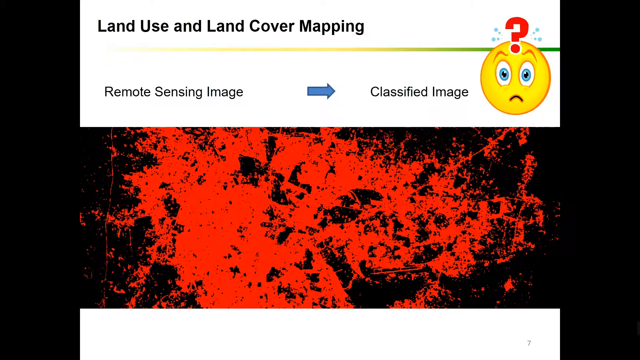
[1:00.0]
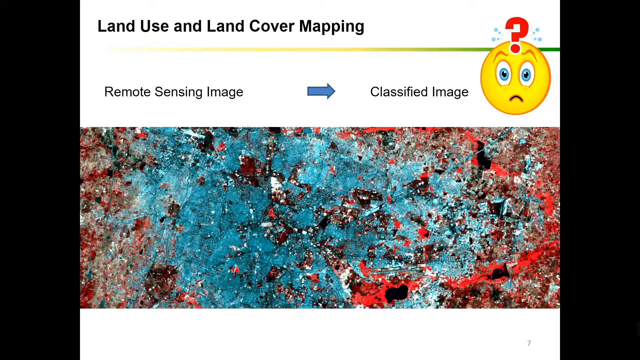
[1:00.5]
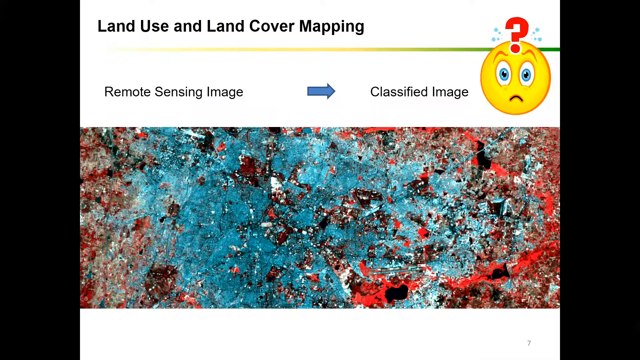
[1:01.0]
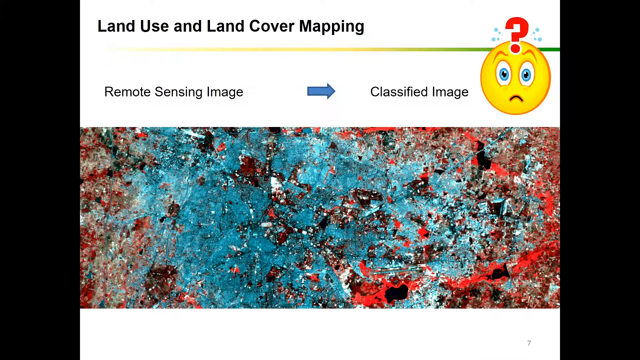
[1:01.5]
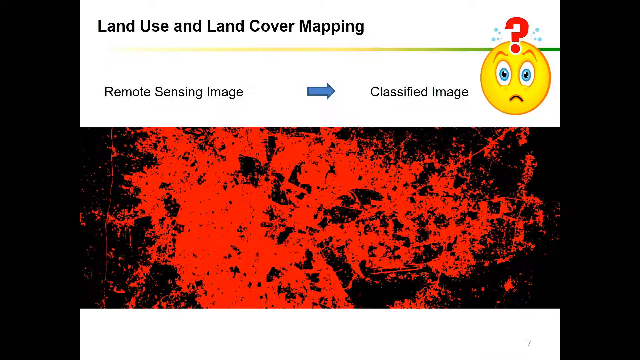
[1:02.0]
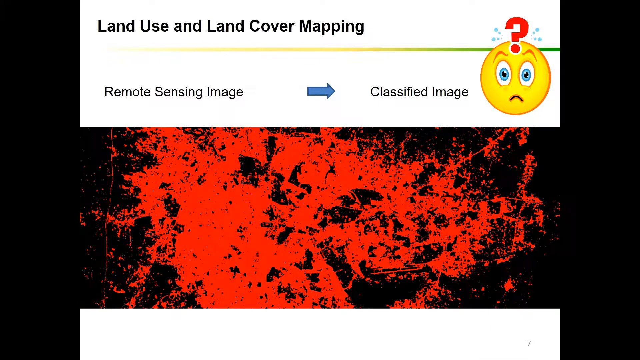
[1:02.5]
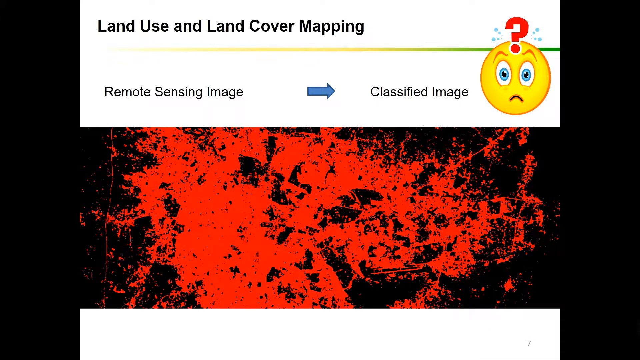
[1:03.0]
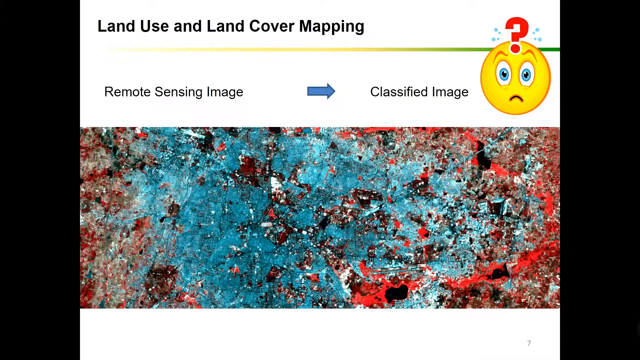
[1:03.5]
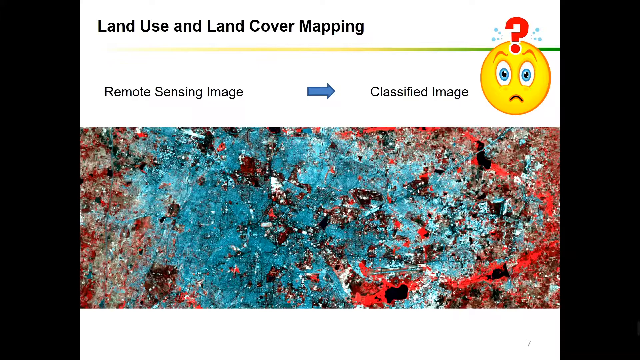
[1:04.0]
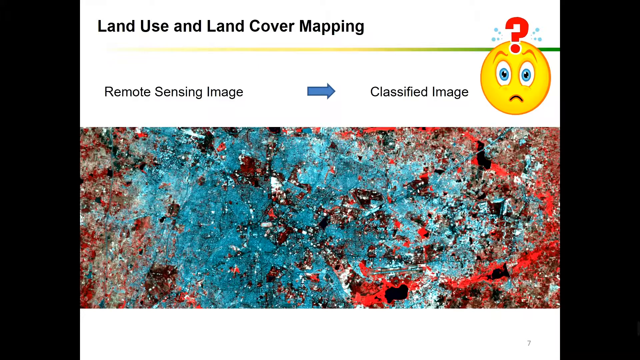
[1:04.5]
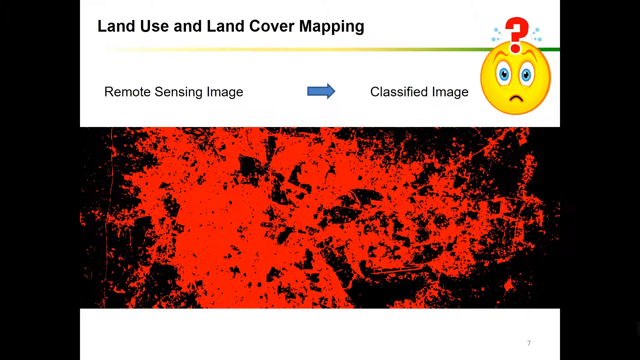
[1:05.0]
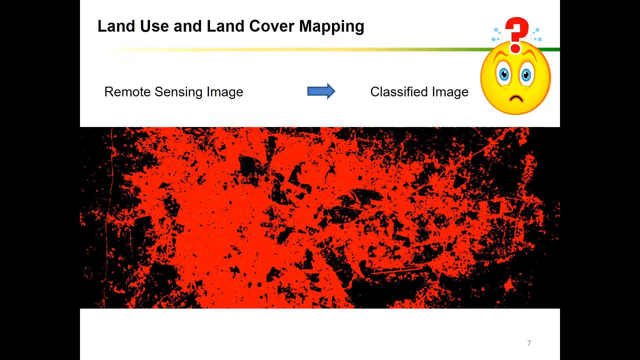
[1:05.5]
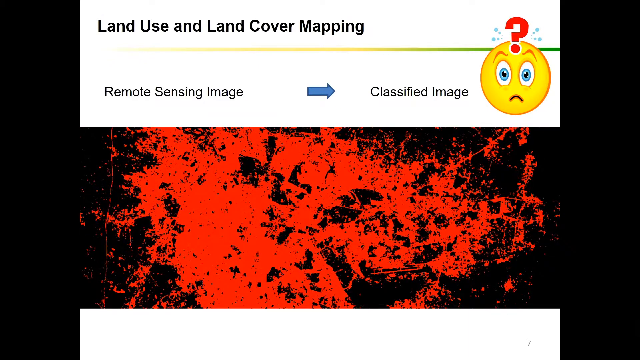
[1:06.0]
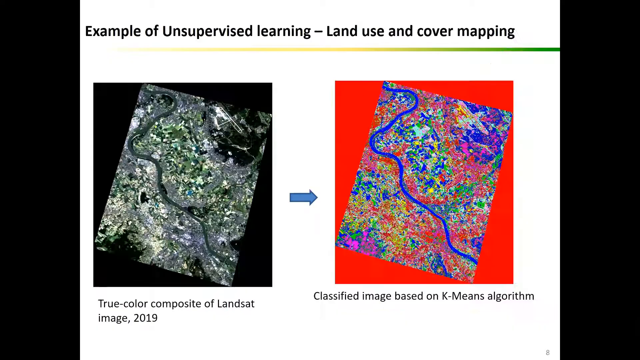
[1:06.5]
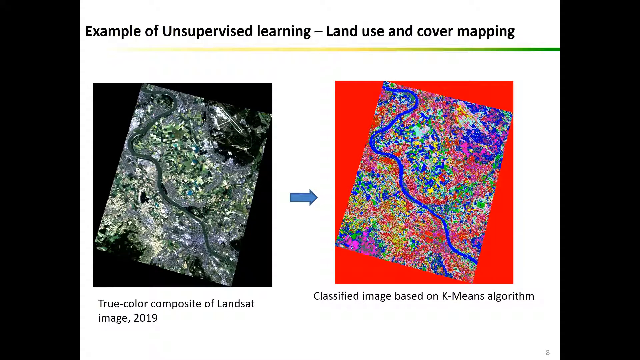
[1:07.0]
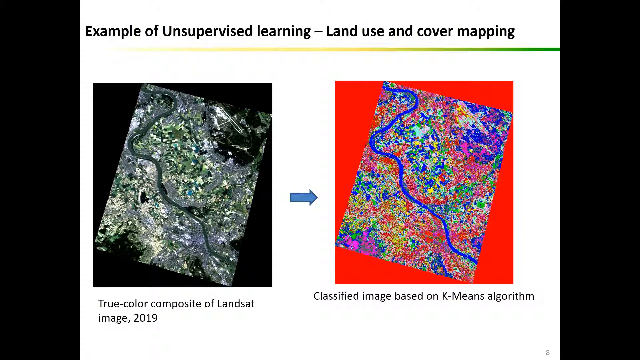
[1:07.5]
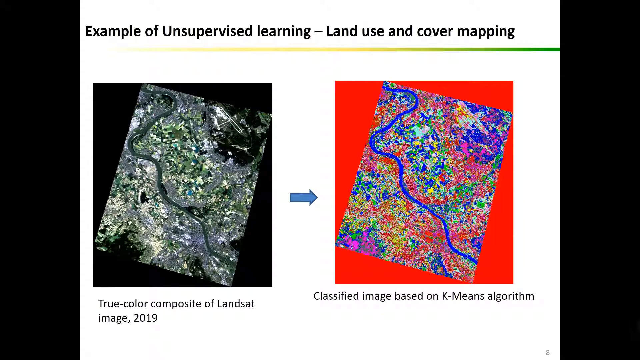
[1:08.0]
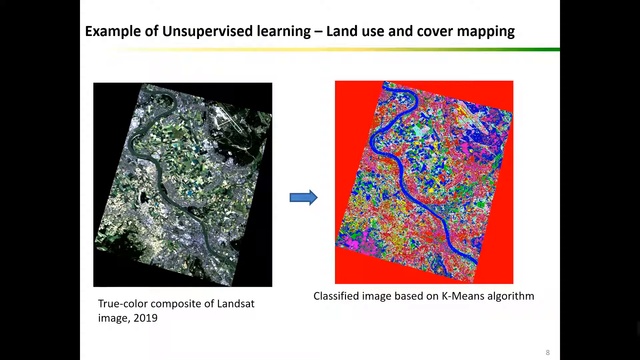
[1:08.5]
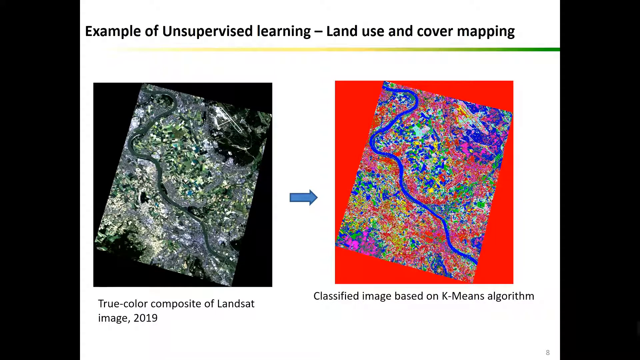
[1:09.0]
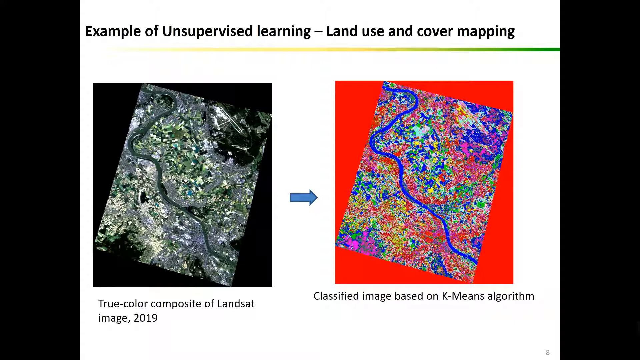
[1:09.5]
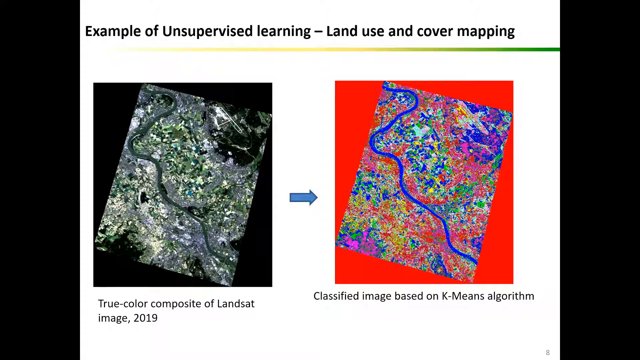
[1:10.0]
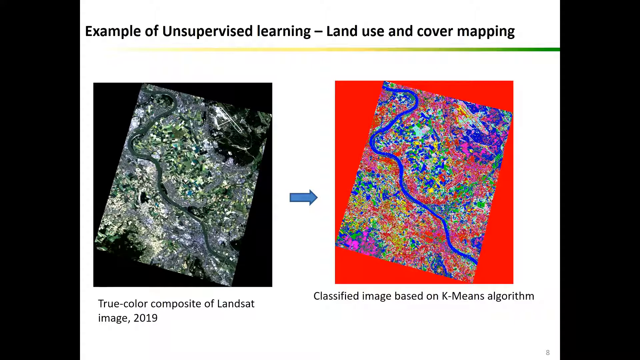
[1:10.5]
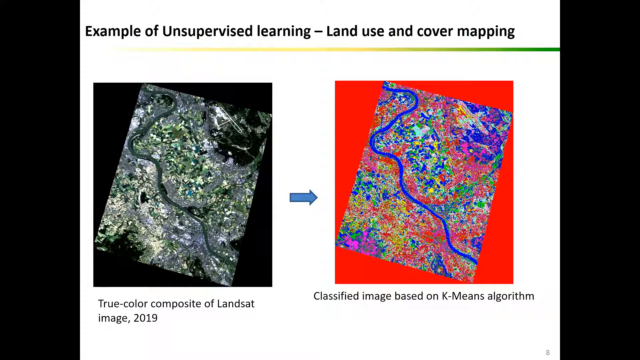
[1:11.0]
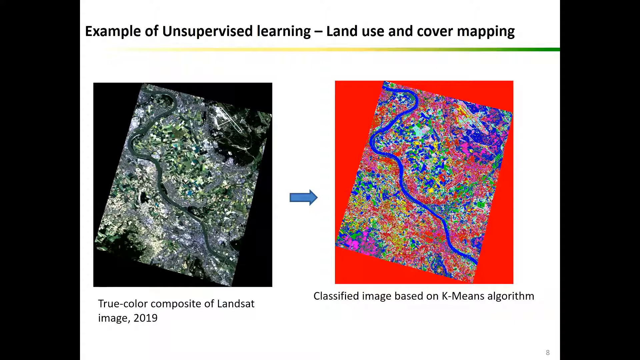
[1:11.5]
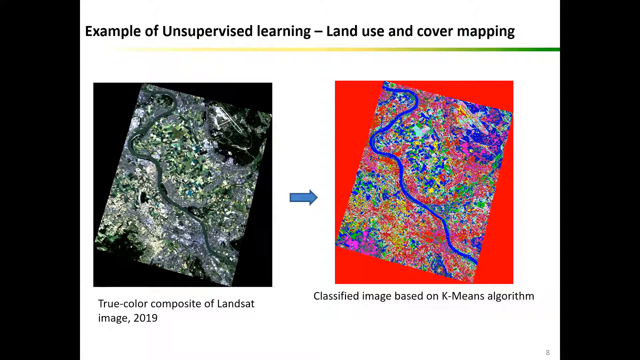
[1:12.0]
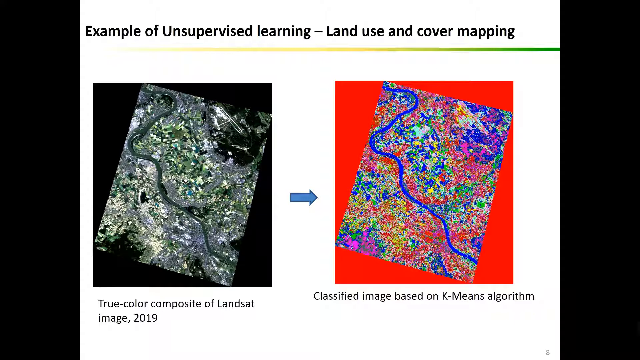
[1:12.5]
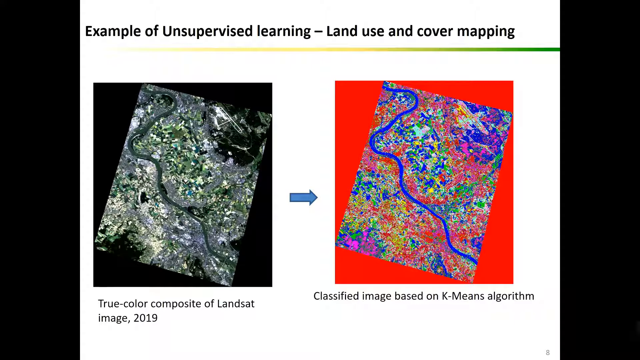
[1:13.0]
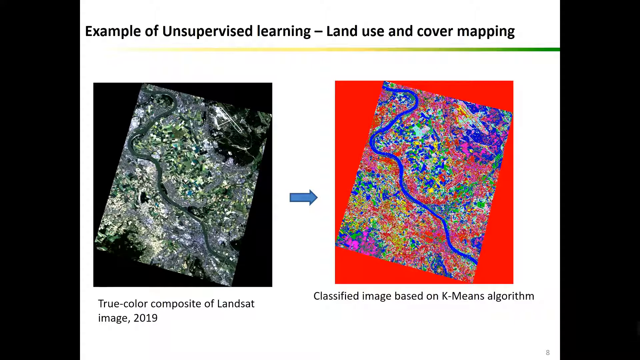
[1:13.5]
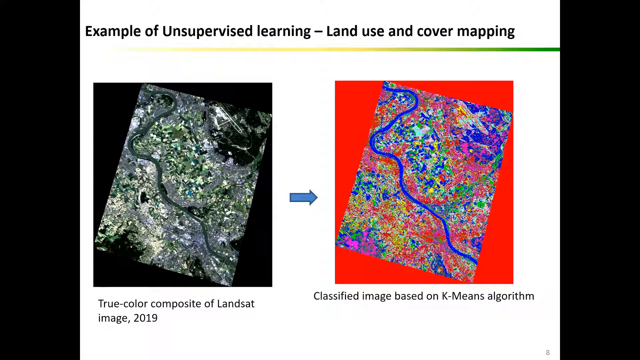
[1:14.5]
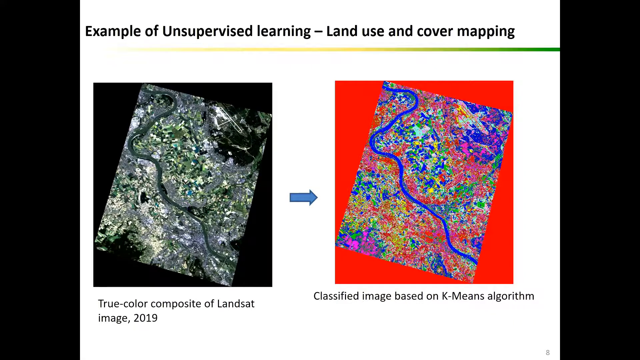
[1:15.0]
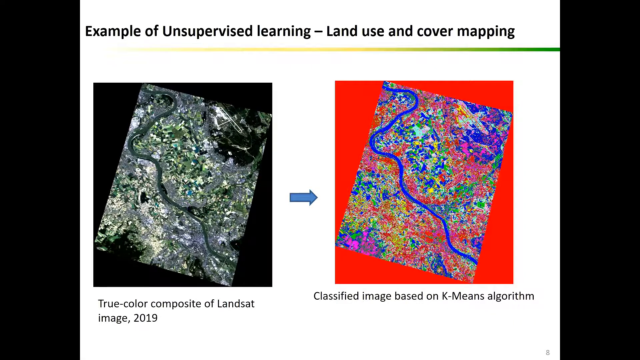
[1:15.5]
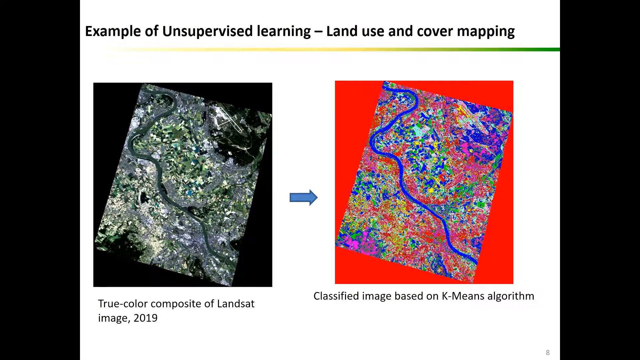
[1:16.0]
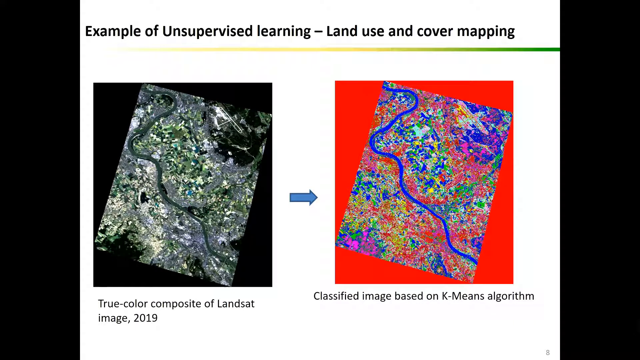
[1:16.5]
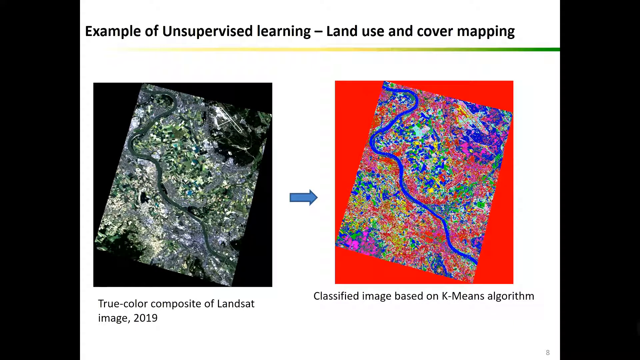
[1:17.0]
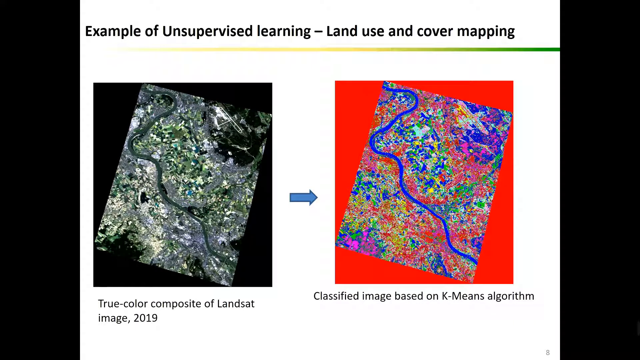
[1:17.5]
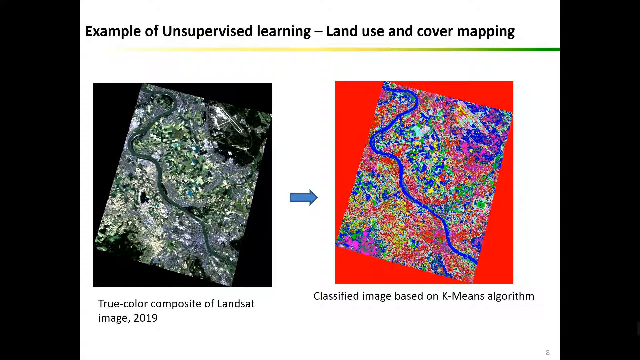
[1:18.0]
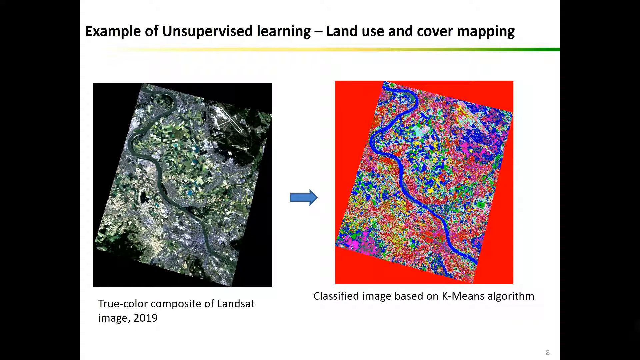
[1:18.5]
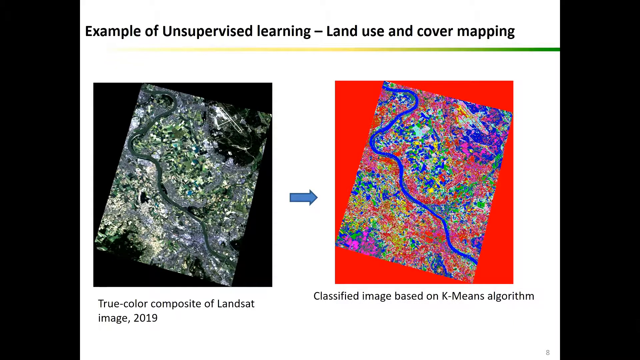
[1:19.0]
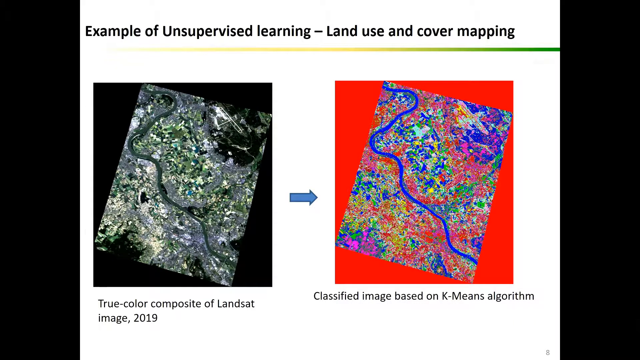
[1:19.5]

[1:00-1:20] A blue, green and red map appears, and the video flashes quickly to a true-color composite of land sat image, presumably a satellite image of the land, with one shown on the left. The video moves very quickly through two or three different images of the land, including the bright red image and the red and blue one, with graphs of some sort running across the top of them. The different maps show different aspects of the land.